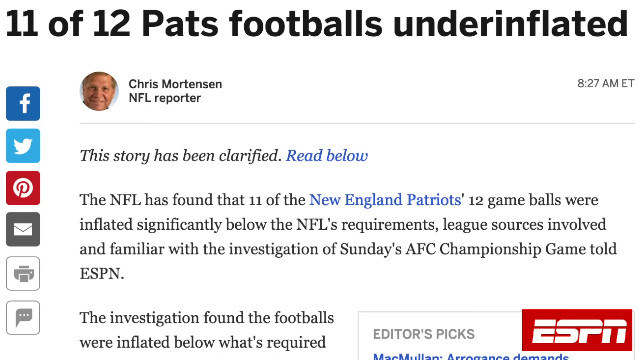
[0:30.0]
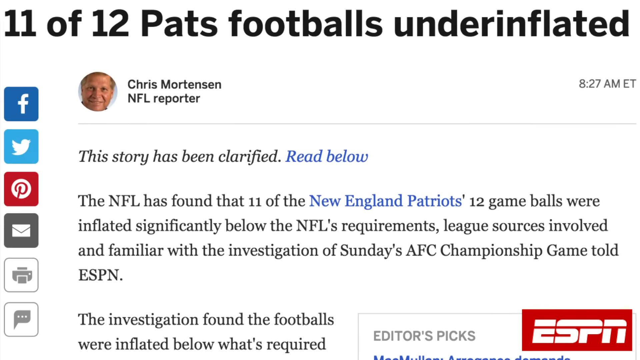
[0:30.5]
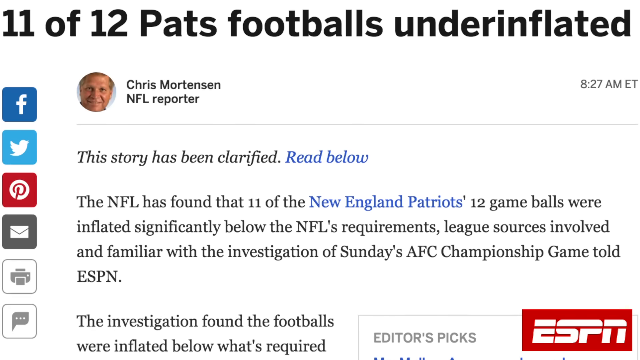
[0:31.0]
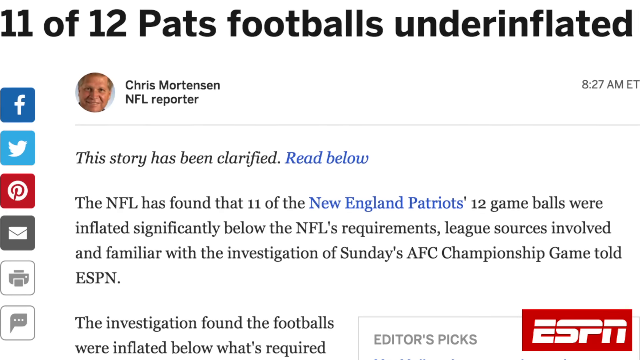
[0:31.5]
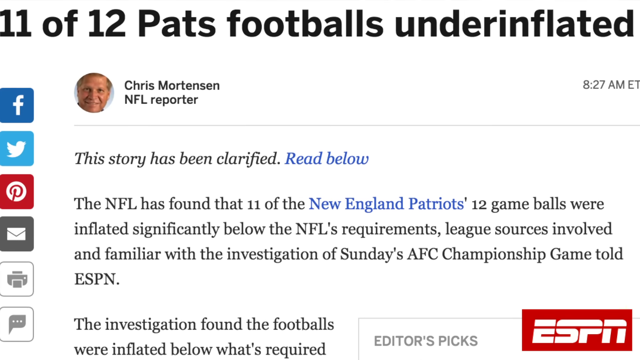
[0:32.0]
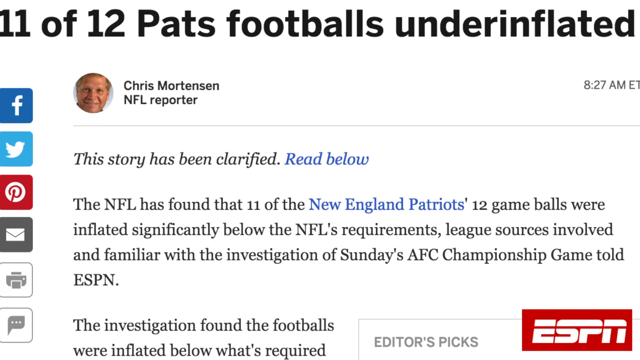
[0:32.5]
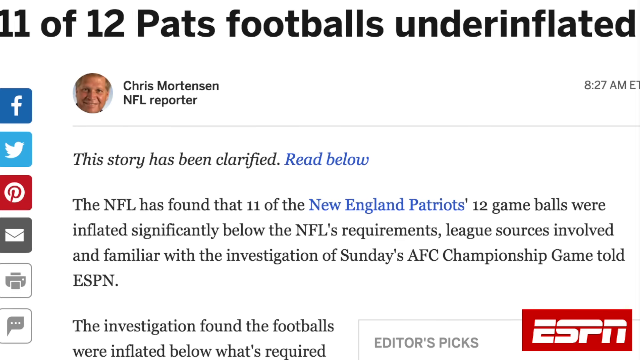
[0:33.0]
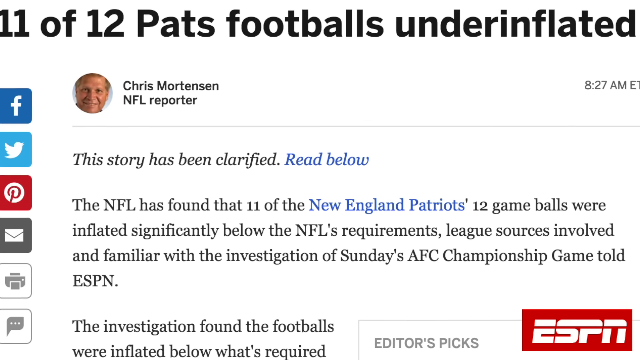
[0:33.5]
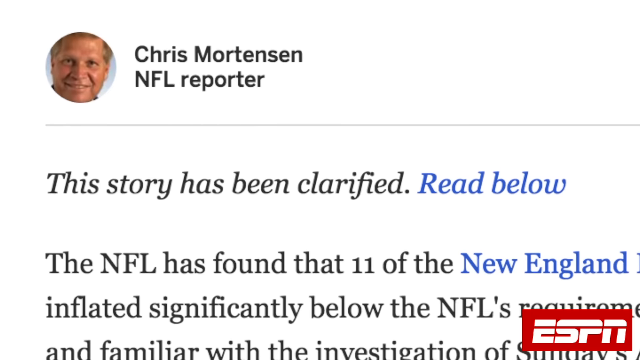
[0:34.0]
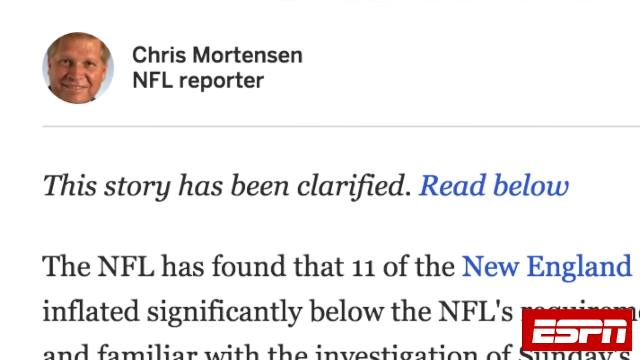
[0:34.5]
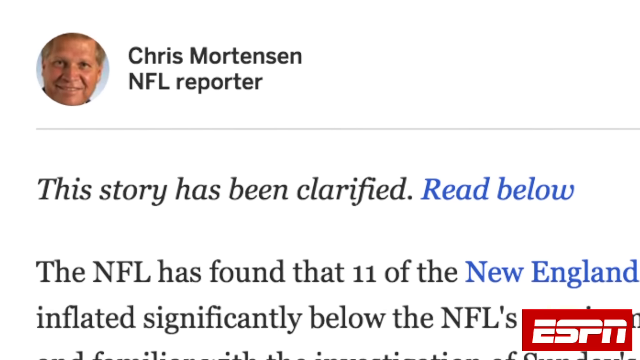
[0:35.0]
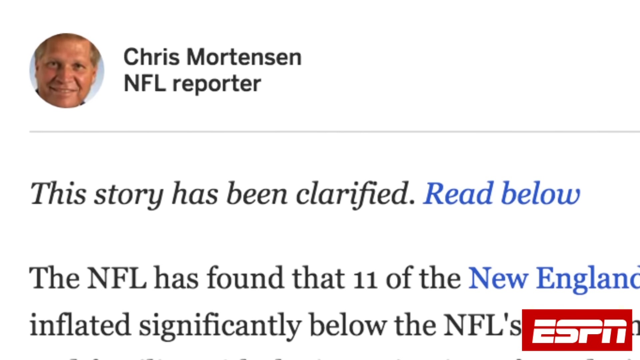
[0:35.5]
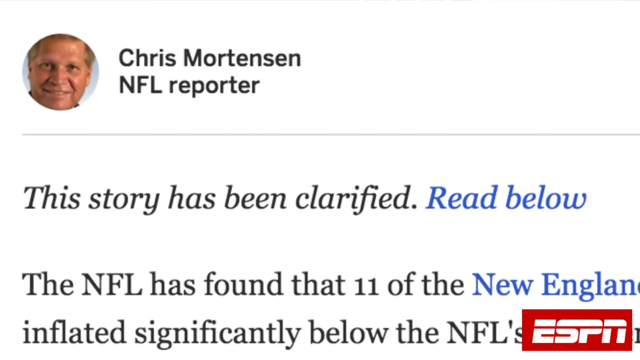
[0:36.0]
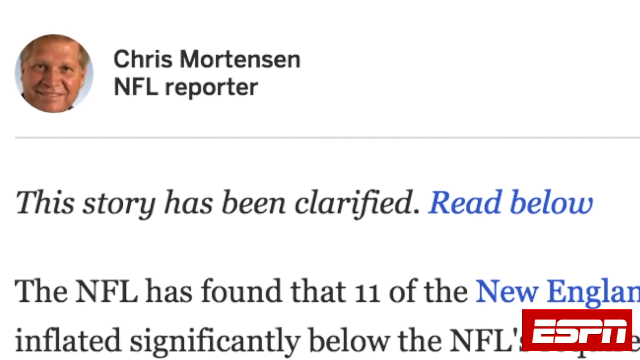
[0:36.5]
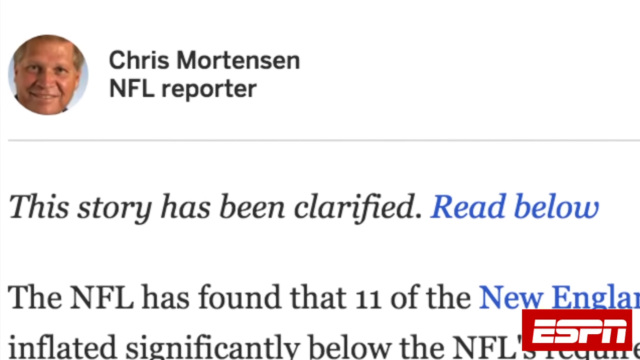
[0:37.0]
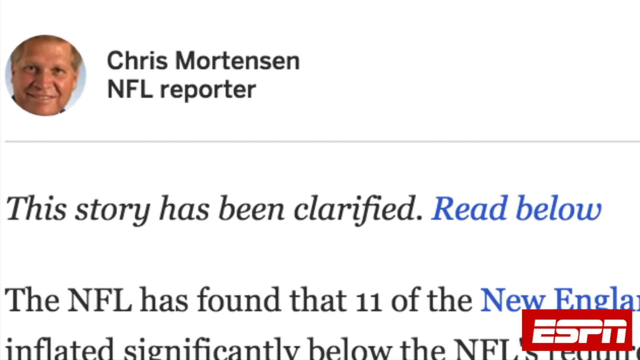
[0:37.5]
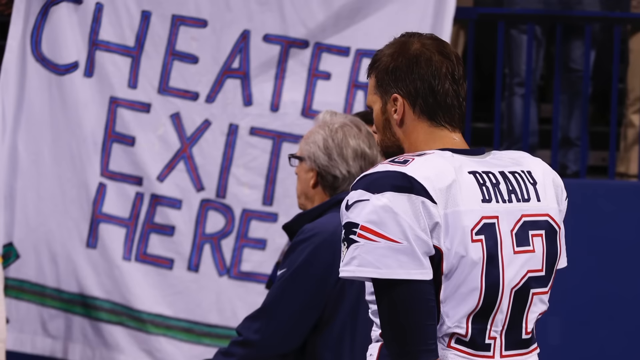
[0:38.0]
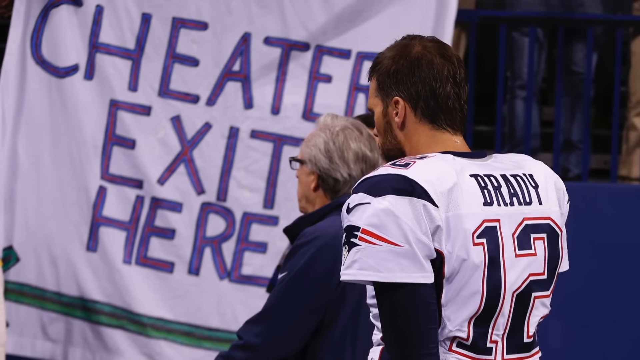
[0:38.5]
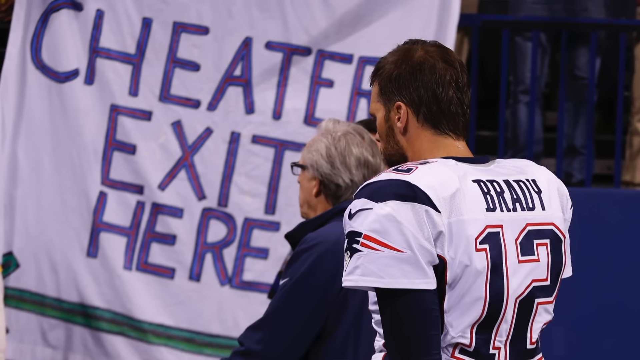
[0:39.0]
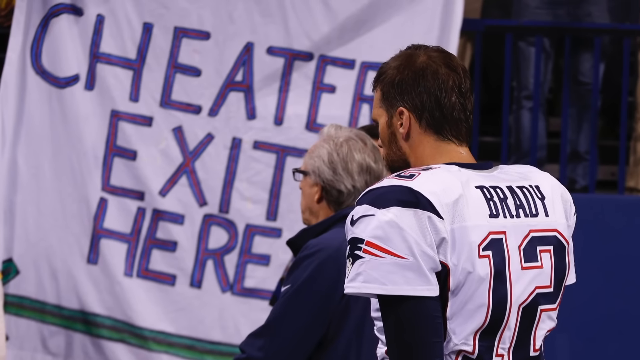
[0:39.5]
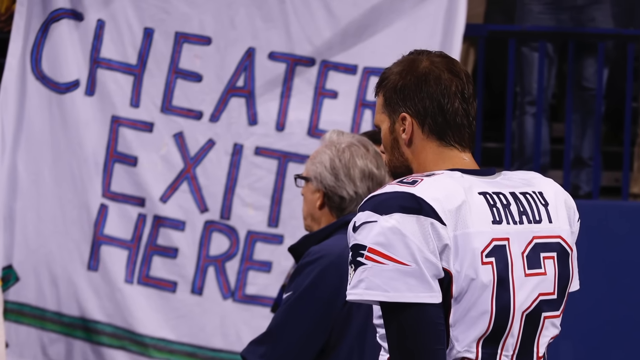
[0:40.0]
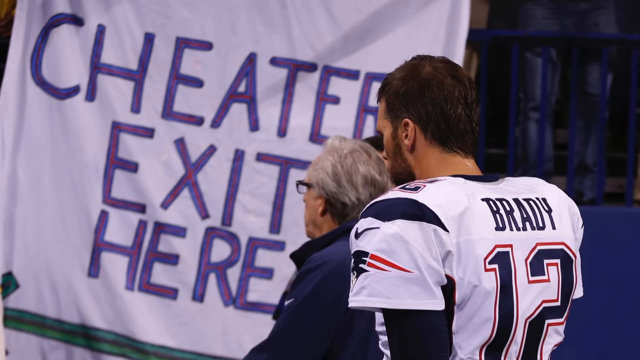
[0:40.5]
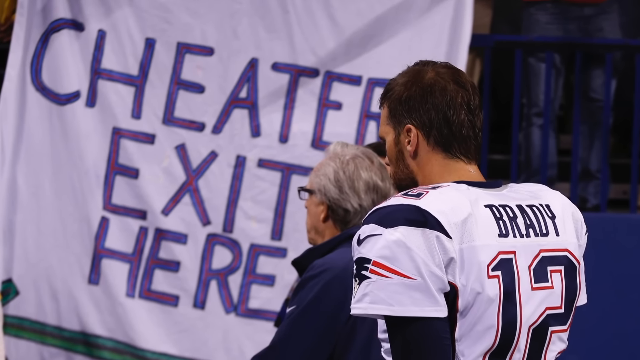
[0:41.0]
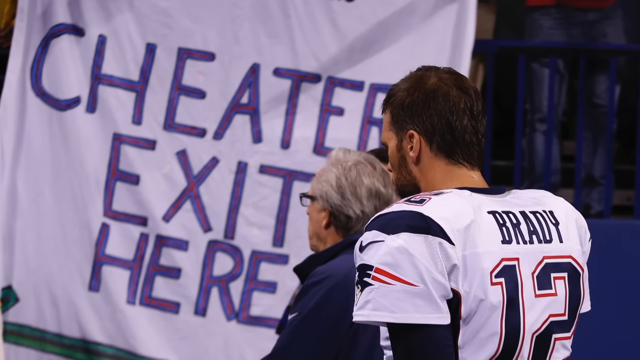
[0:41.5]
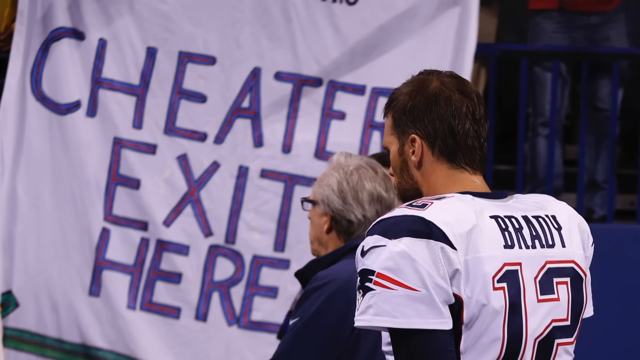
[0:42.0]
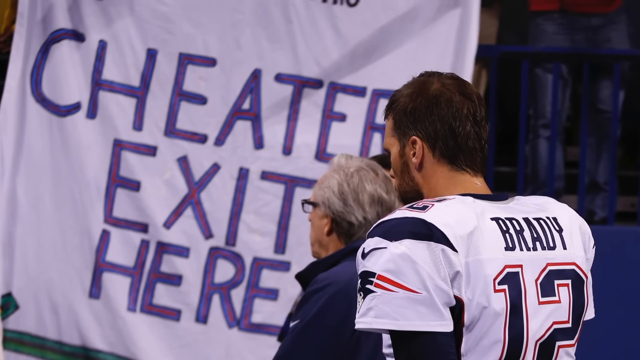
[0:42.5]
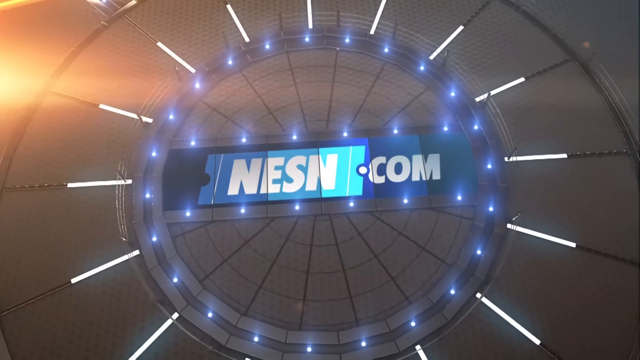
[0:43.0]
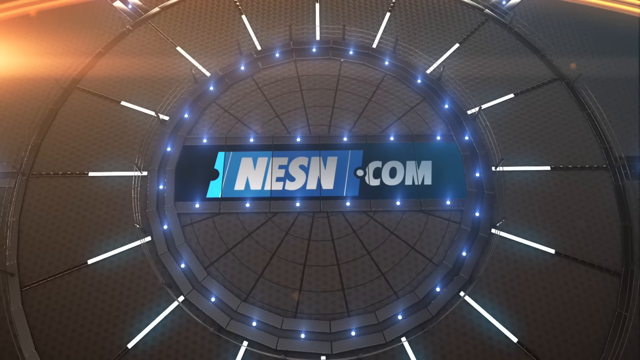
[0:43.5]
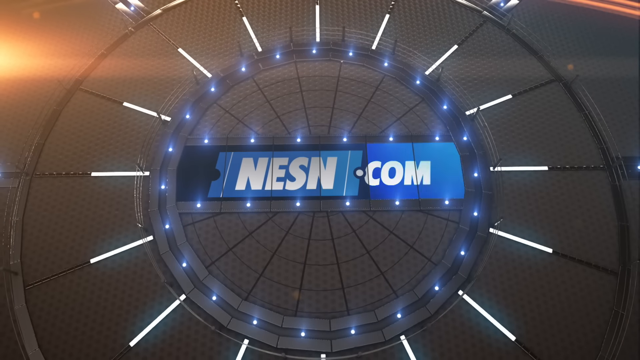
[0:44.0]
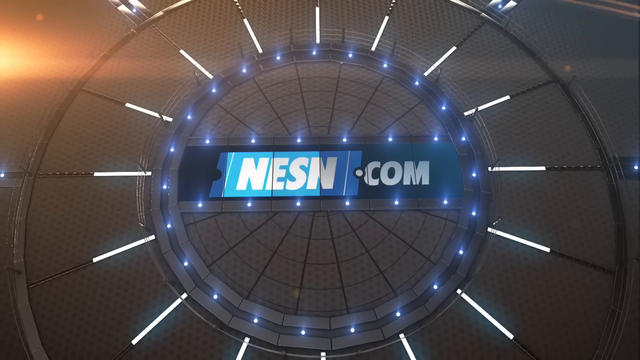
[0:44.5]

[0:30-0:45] The news article about the Deflategate, written by Chris Mortensen and published at 8:27 a.m. Eastern Time, is on screen. It mentions that several game balls from the New England Patriots were inflated below the league's requirement. The view zooms in on the reporter's name, Chris Mortensen, and then zooms in a little more. The image then changes to the back of Tom Brady, whose face is not visible; he is standing with someone from the staff ahead of him. Behind him is a poster reading "Cheater exit here" in big blue letters. Afterwards, the video transitions to the outro of the news anchors.